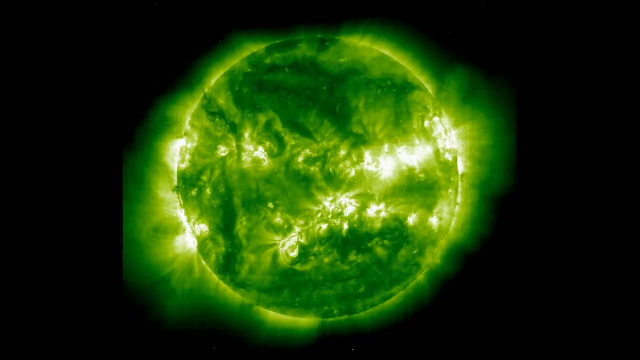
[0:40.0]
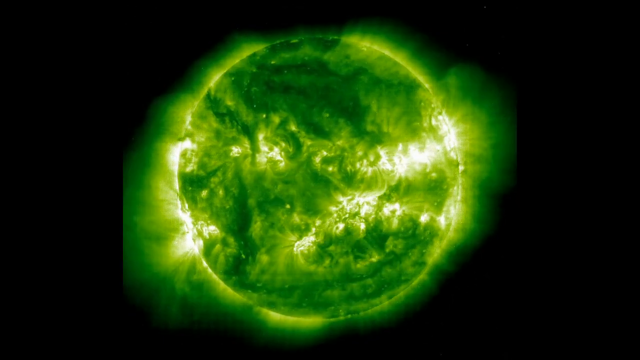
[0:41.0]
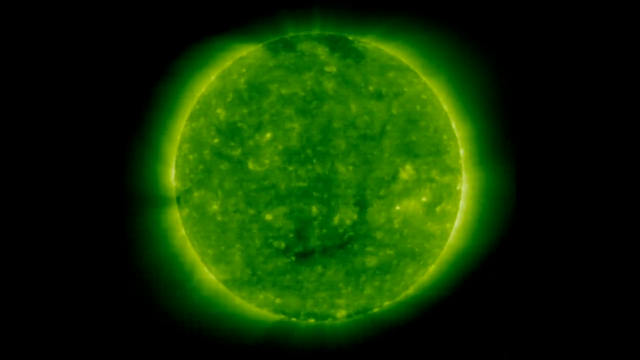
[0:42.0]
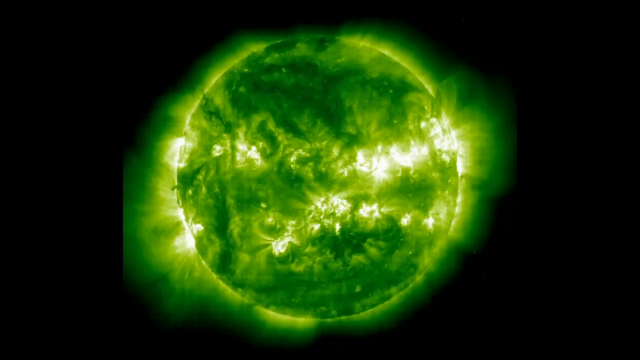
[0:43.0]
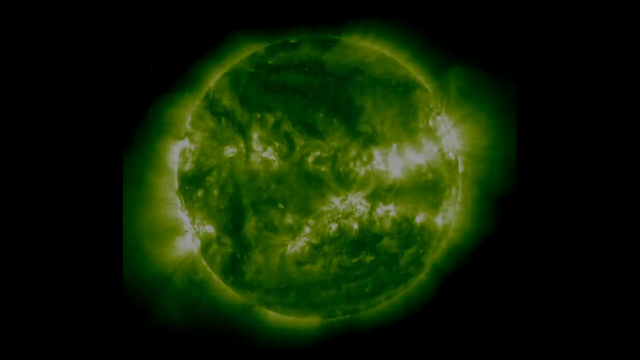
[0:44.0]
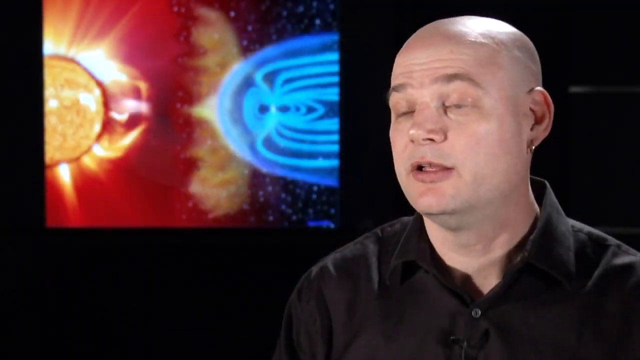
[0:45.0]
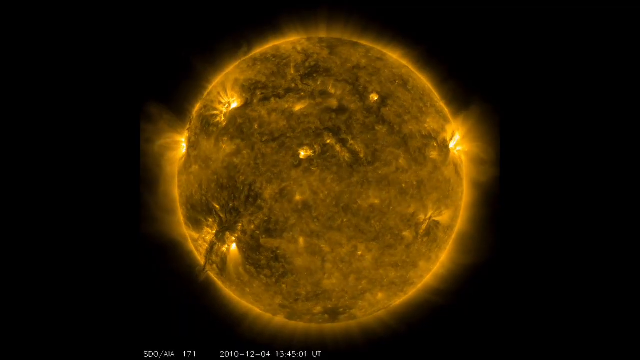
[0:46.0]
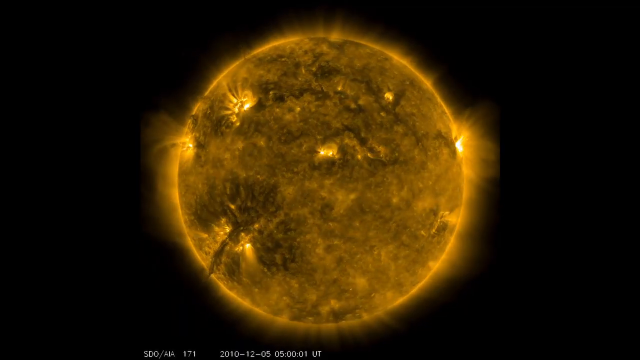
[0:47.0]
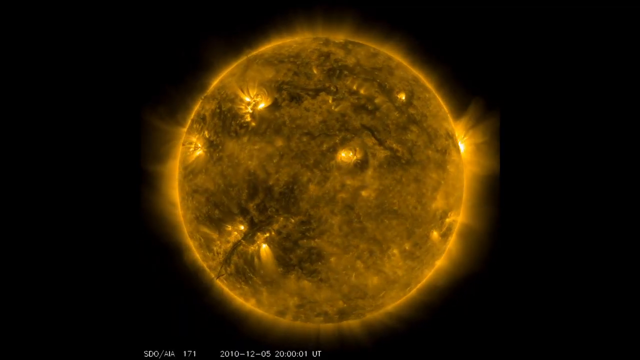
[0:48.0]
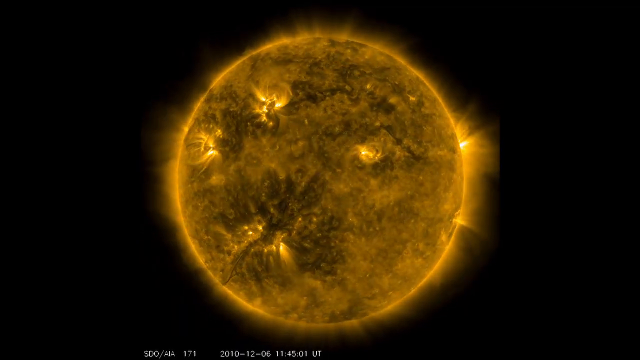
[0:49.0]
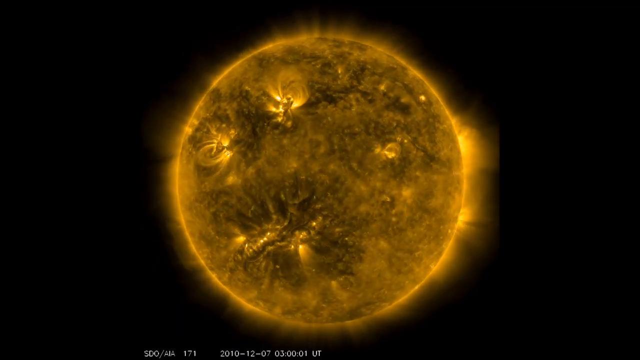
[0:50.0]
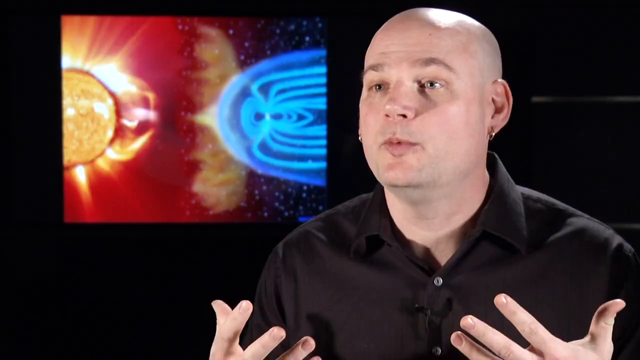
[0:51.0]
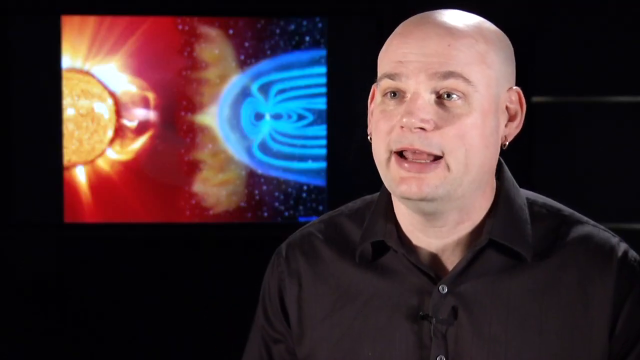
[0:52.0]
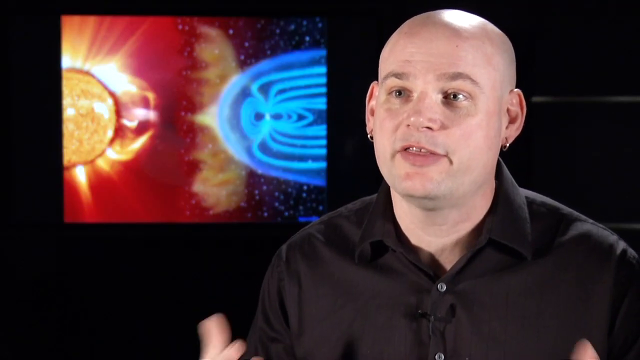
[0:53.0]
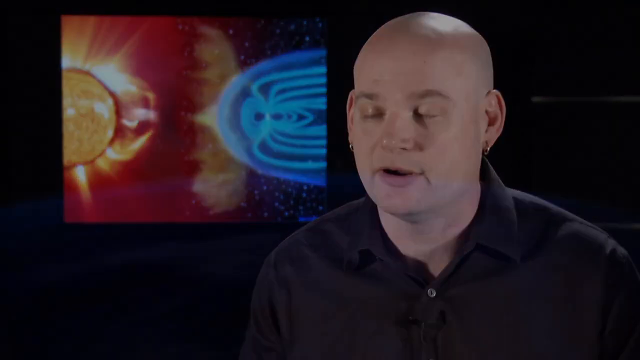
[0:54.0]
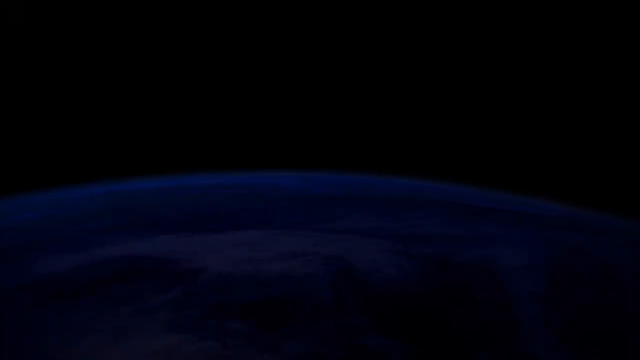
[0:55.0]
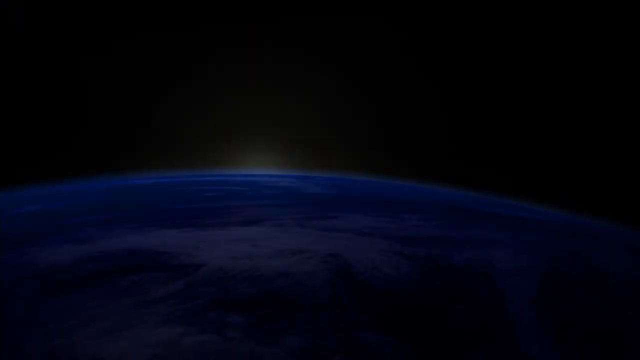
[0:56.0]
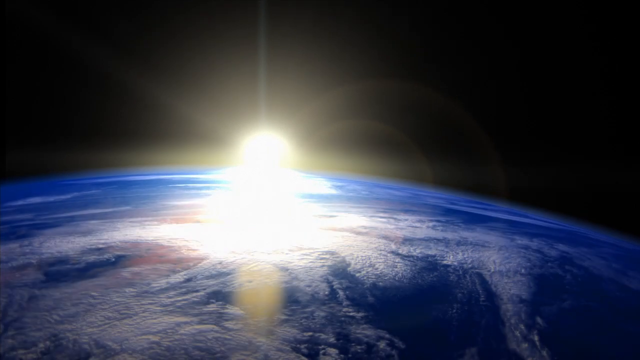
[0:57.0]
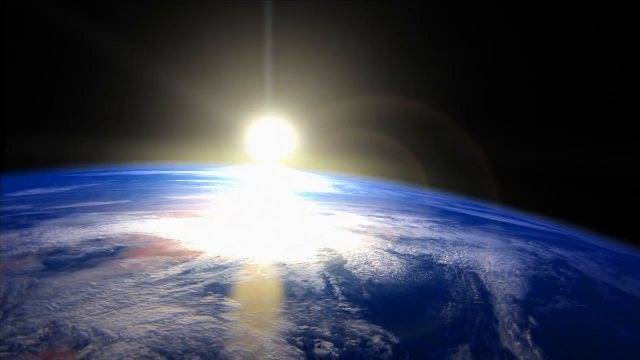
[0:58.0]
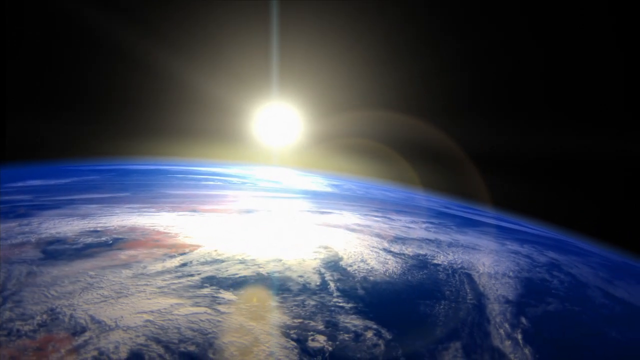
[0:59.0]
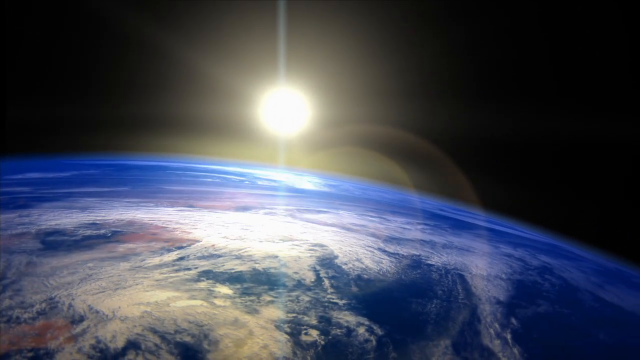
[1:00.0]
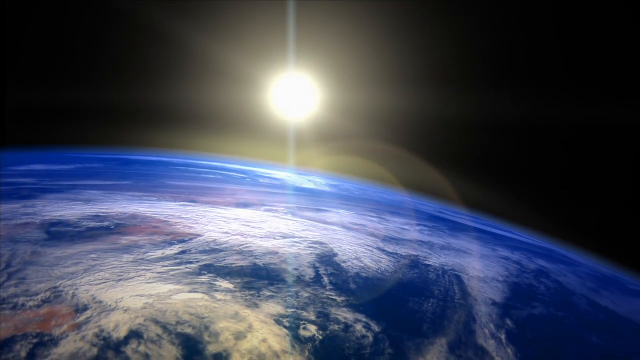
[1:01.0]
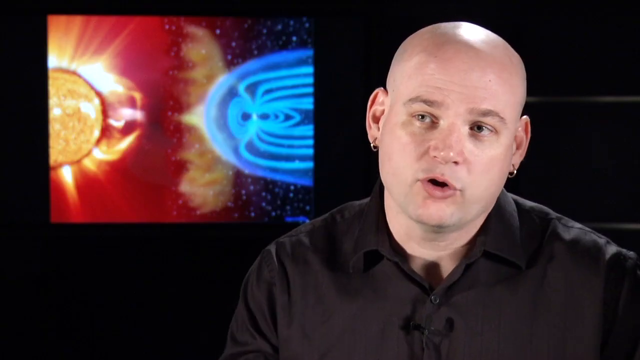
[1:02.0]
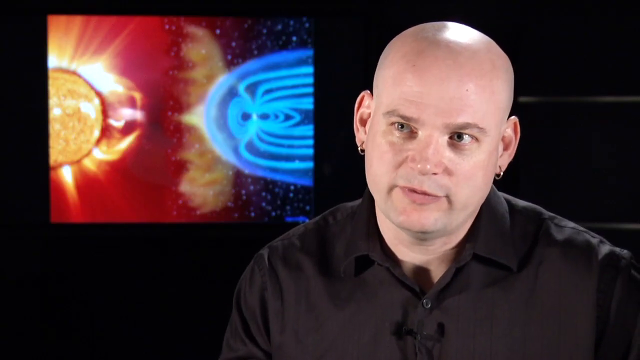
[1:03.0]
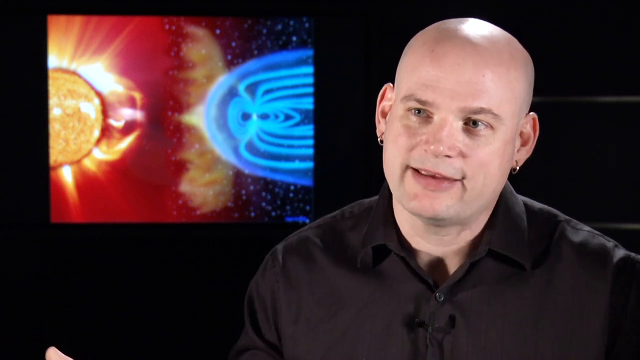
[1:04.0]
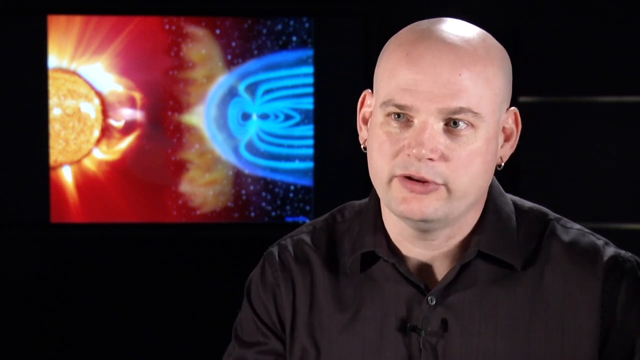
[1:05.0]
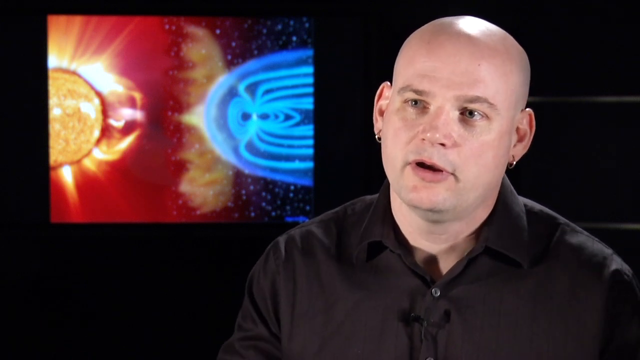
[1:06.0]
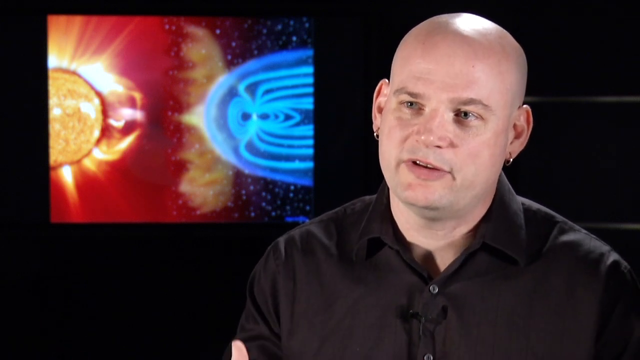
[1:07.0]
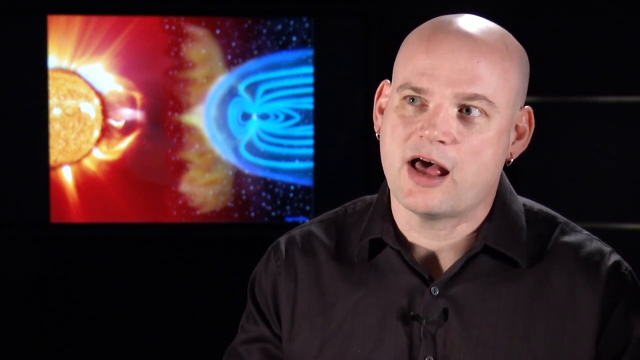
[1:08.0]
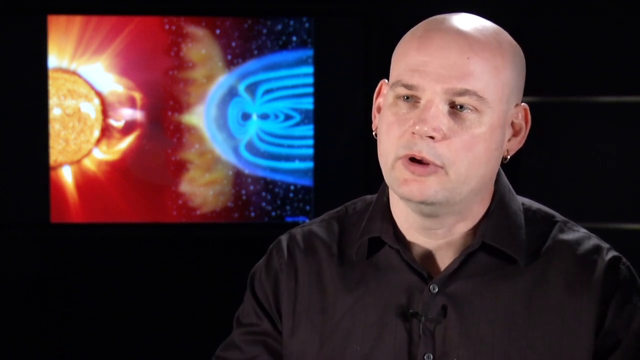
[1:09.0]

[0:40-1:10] The green sun rotates to the right in the middle, with white areas of light on its middle section. They disappear, leaving the sun all light green, with a light green aurora around it and complete darkness outside. White areas appear on the sun again as it rotates. The man talks on the right side as before. The scene changes to a sun in the middle that looks dark yellow, rotating to the right, with a total of four storms appearing on it. After another shot of the man talking, a view shows the Earth at the bottom while the sun comes from the distance in the center and rises above the Earth's horizon into space, very bright. The man is then shown talking again, looking to the left as he speaks.